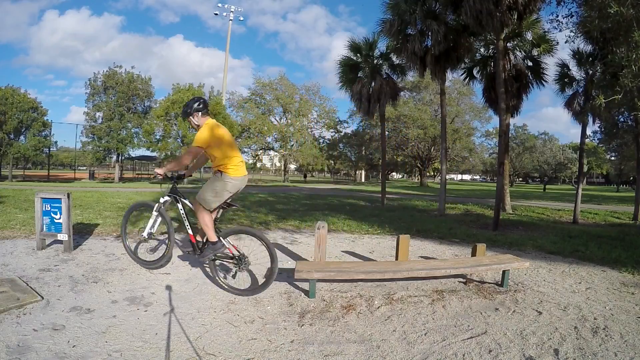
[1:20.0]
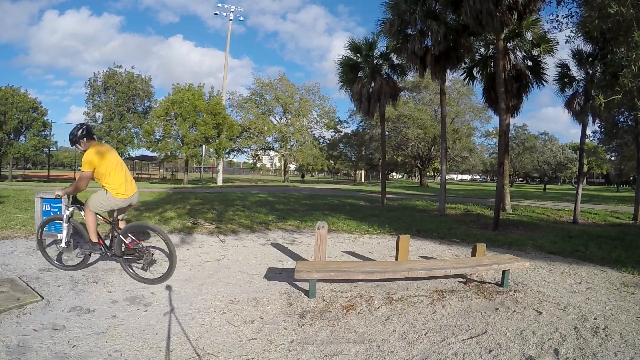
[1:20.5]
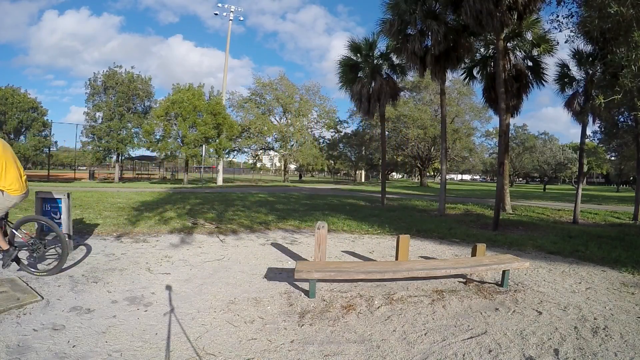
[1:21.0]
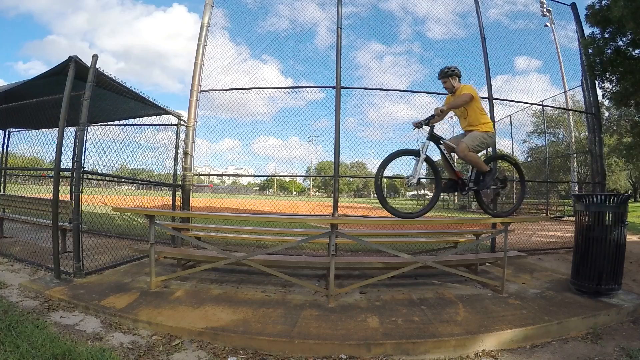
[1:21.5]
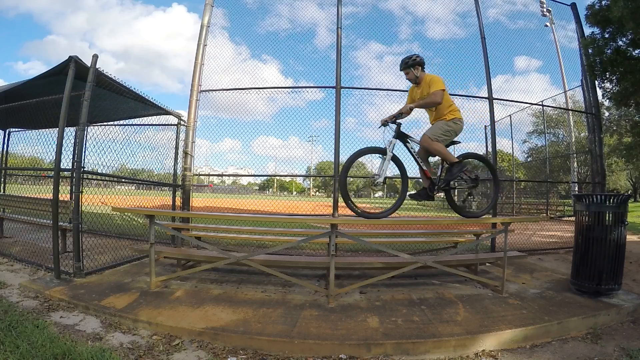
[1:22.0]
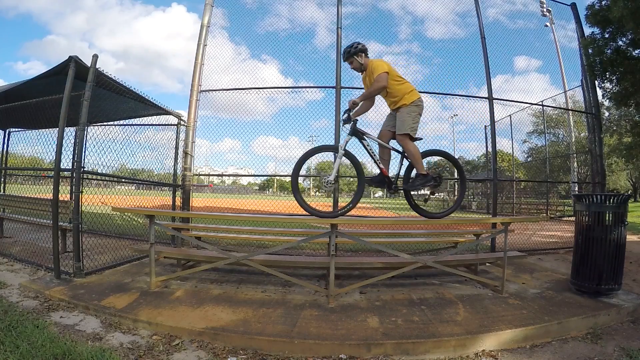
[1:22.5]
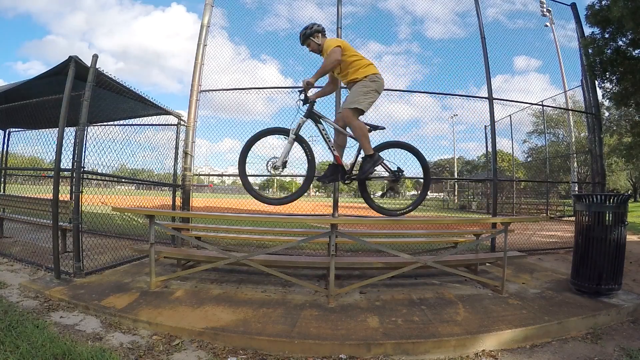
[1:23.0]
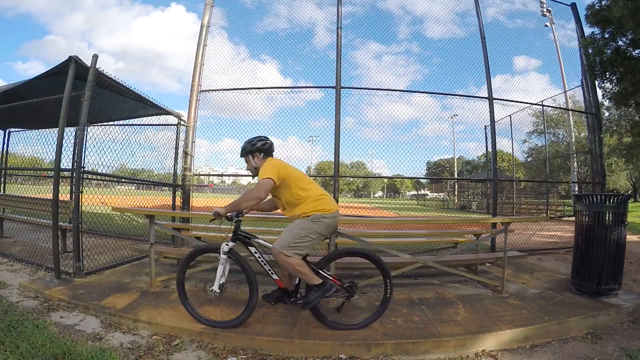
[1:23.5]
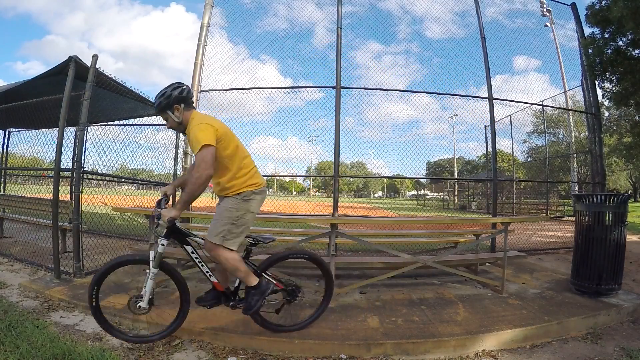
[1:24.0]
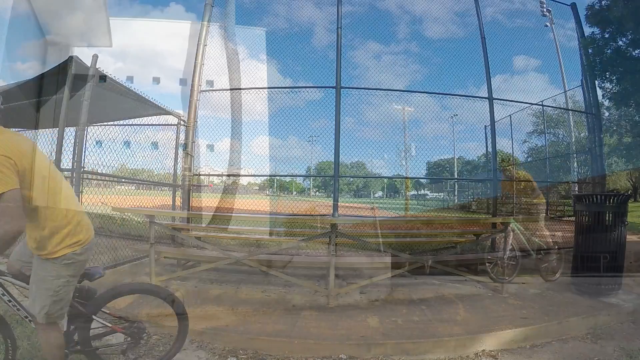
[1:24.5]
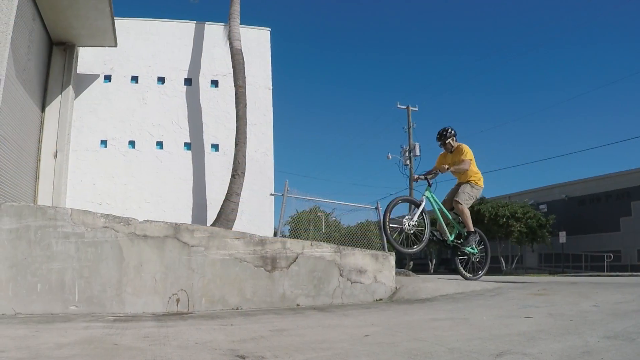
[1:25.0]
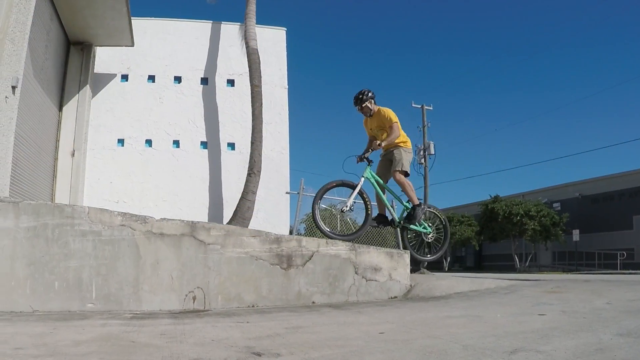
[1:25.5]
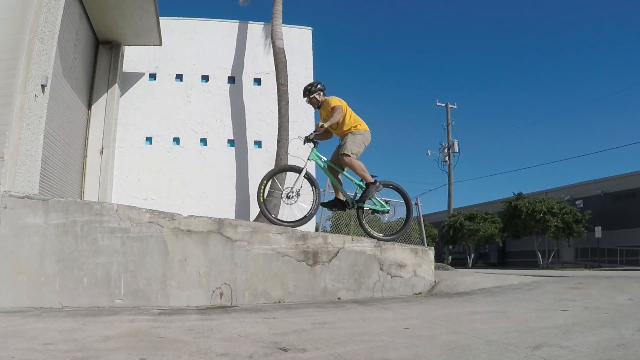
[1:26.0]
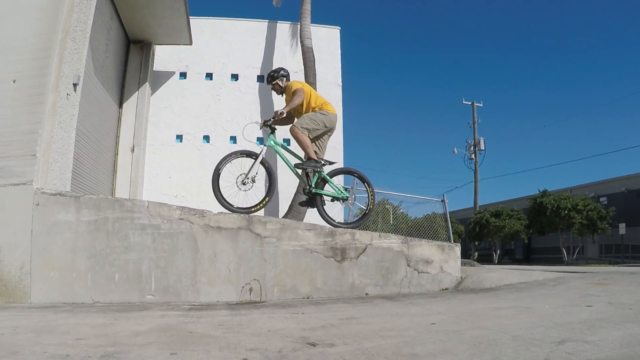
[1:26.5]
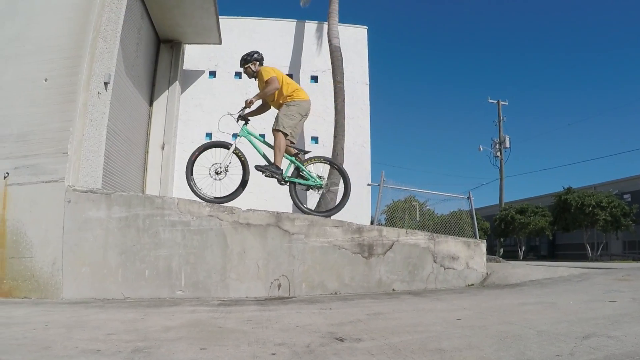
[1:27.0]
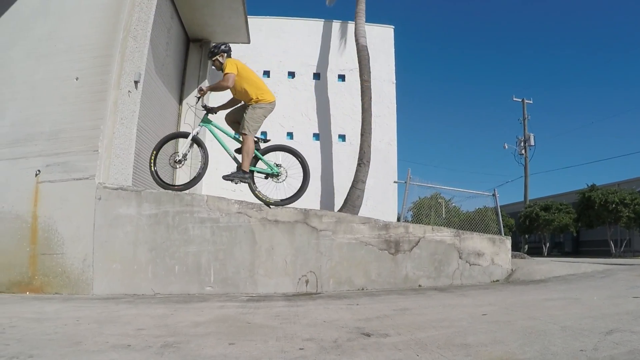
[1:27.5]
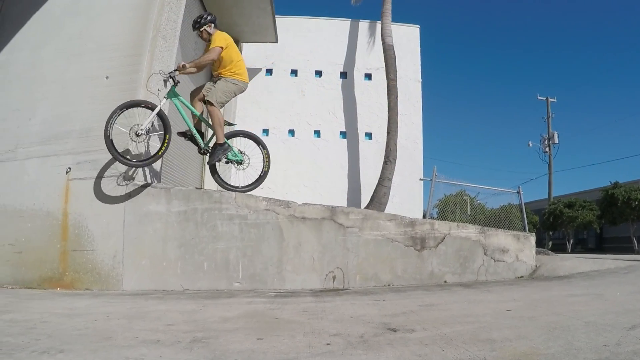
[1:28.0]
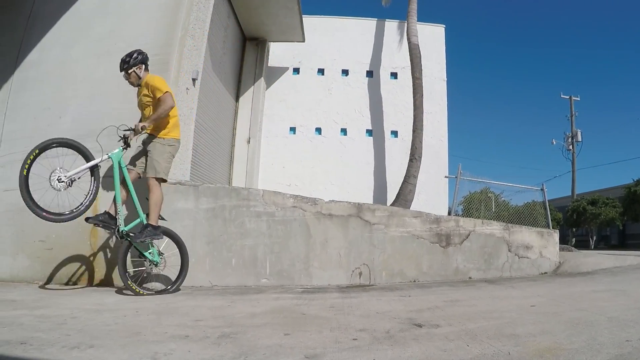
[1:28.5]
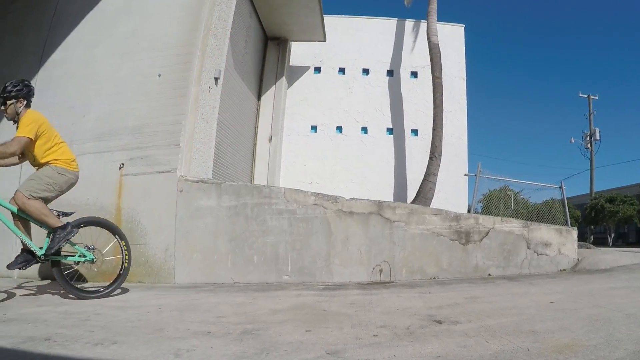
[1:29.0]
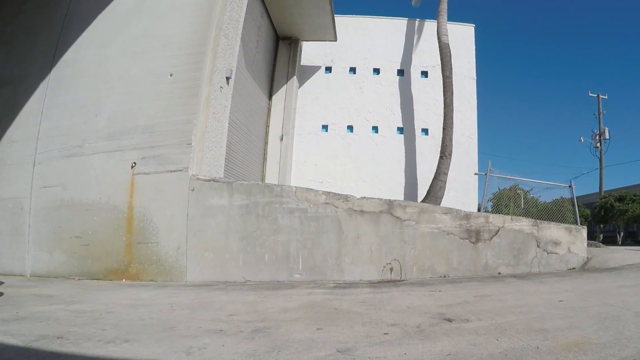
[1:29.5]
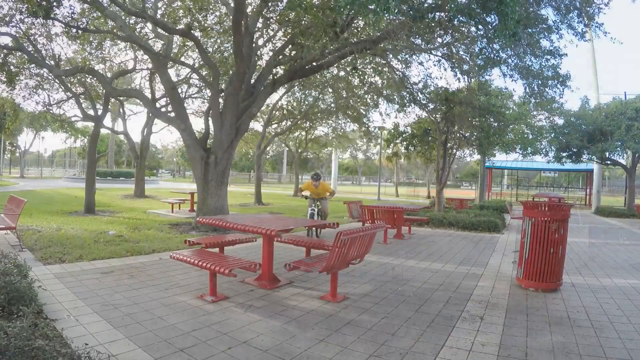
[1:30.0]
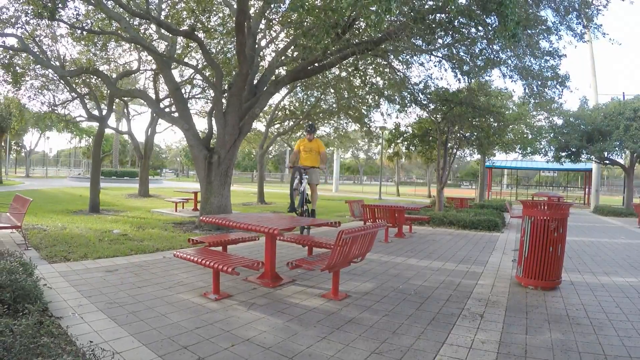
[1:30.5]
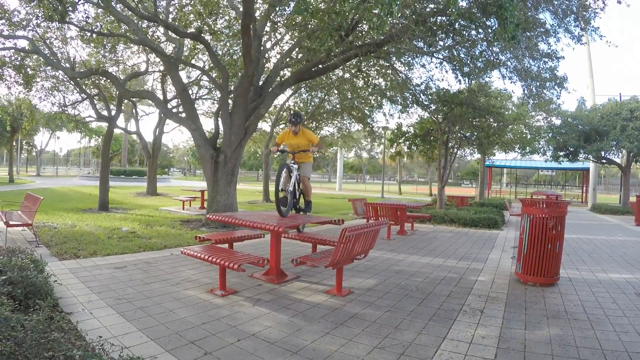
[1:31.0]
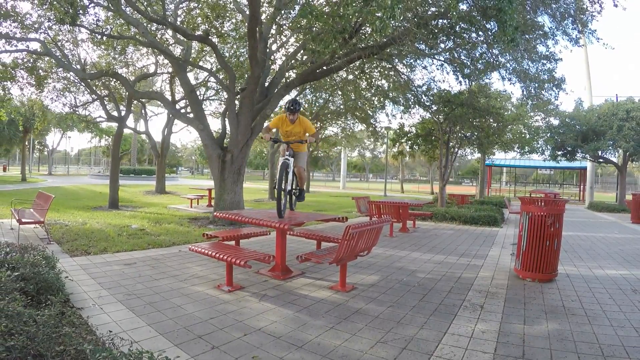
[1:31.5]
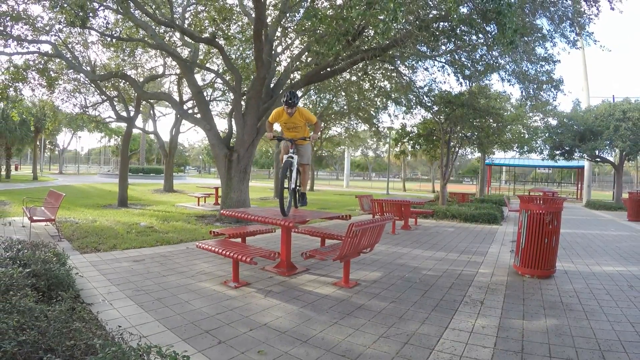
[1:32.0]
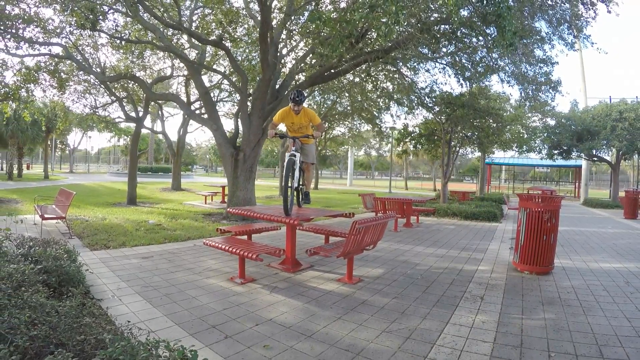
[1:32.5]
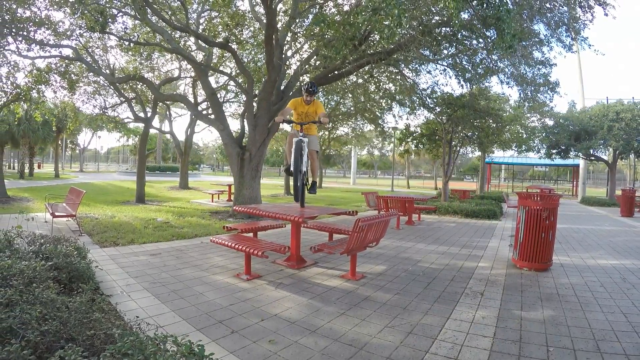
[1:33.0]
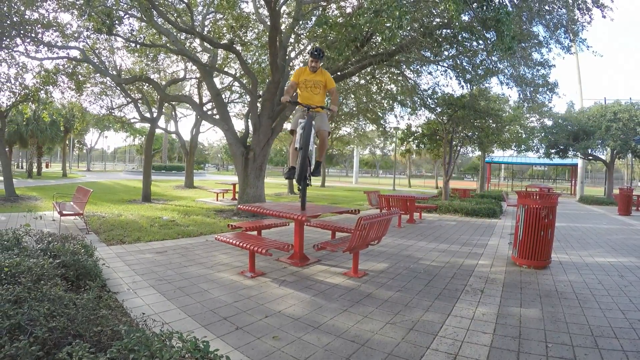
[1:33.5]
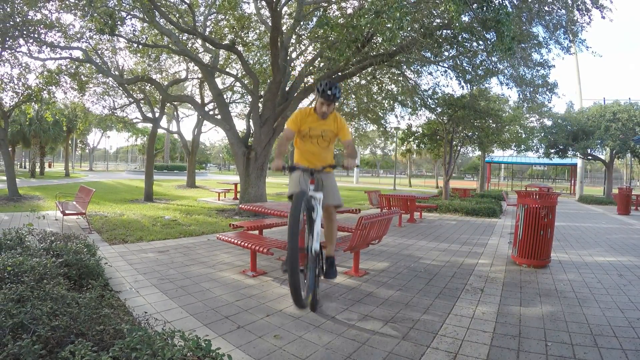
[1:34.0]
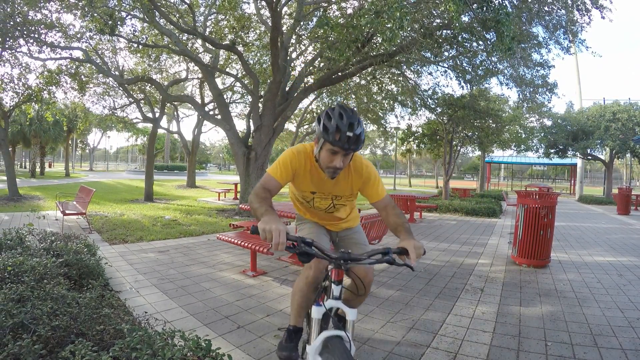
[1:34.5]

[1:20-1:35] A montage shows a man in a yellow t-shirt on a bicycle jumping from various items; he appears to be demonstrating ways to land safely from obstacles. He jumps off large concrete obstacles such as a loading dock and is shown jumping on a red outdoor picnic table, where he hops in the air a couple of times on the bicycle and then lands on a brick surface below. He also jumps onto an outdoor bench in a sports field, stops midway along it, and jumps down onto a dirt surface.